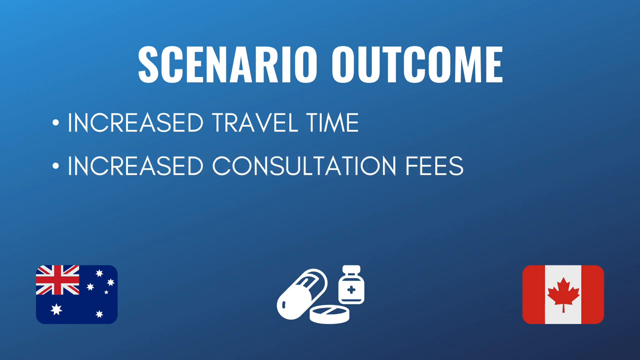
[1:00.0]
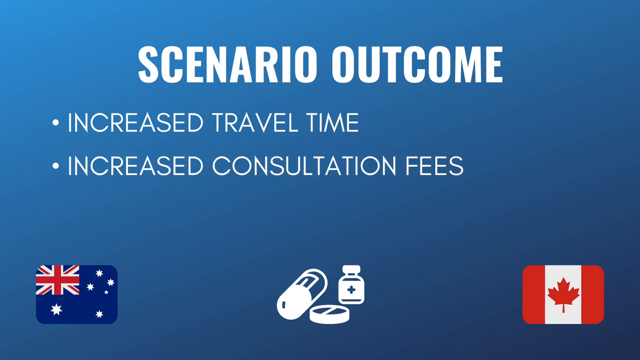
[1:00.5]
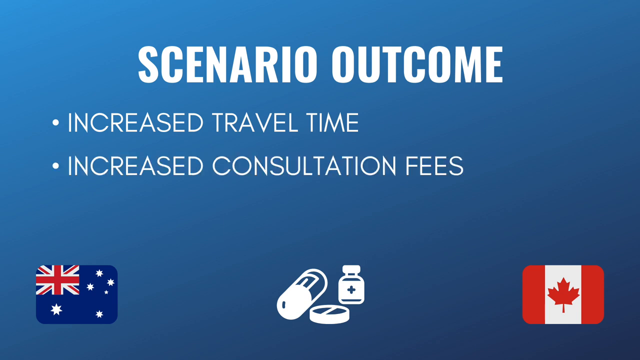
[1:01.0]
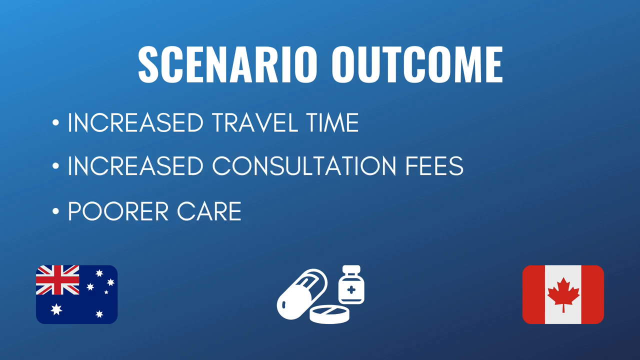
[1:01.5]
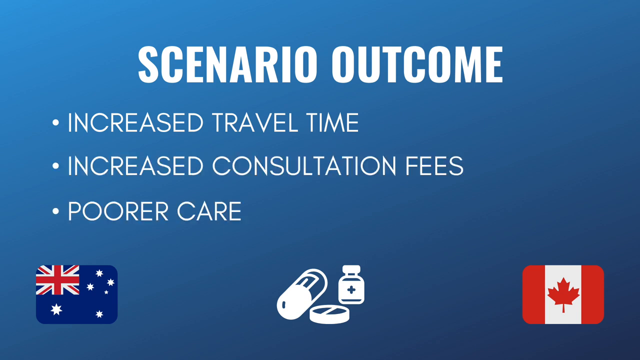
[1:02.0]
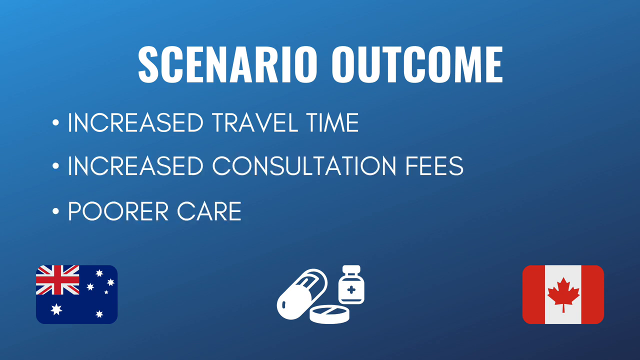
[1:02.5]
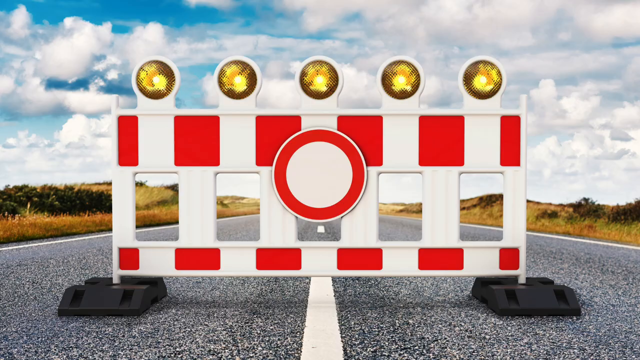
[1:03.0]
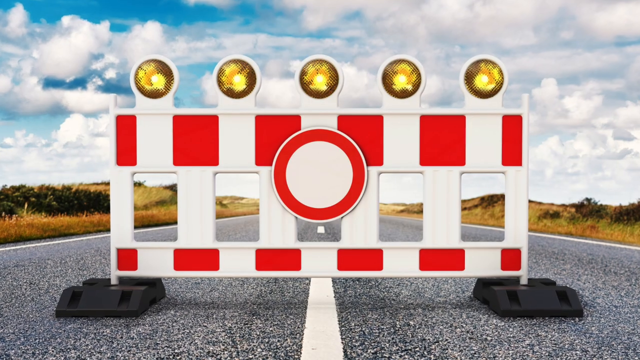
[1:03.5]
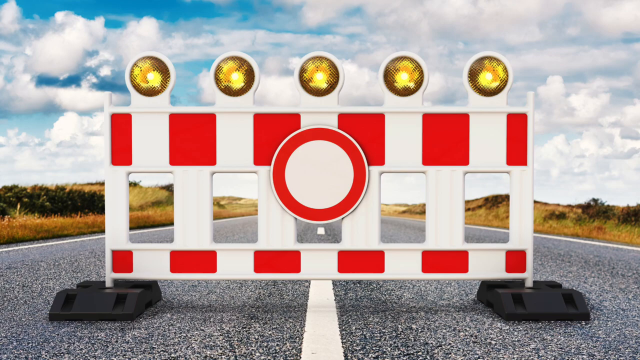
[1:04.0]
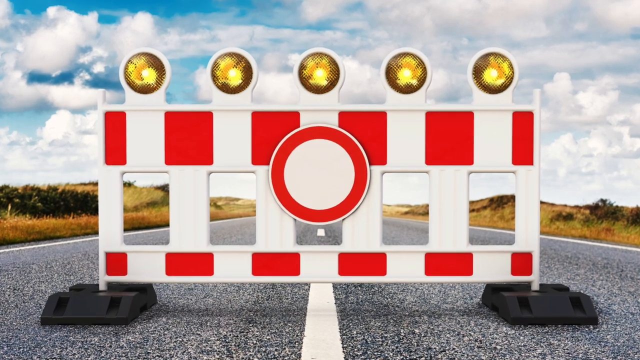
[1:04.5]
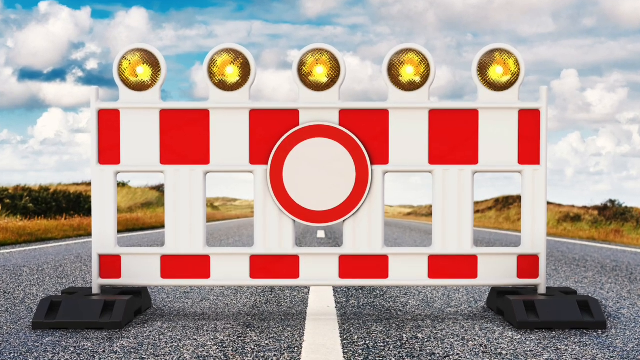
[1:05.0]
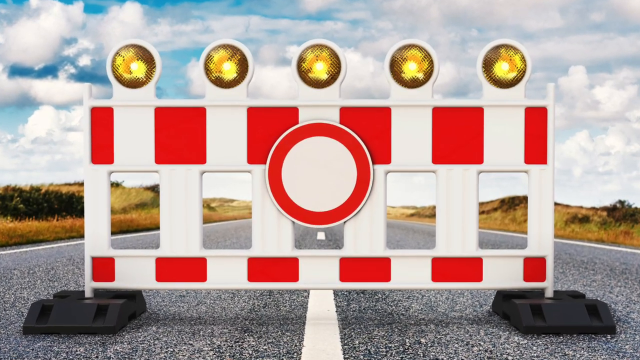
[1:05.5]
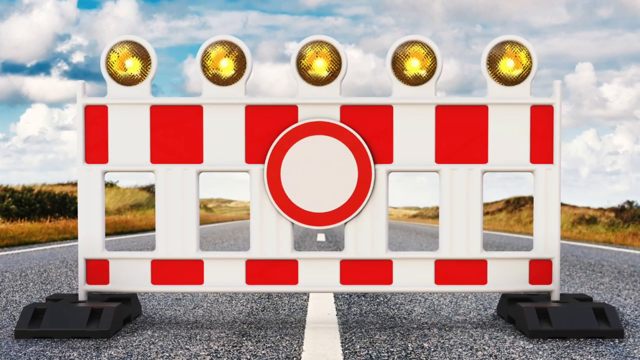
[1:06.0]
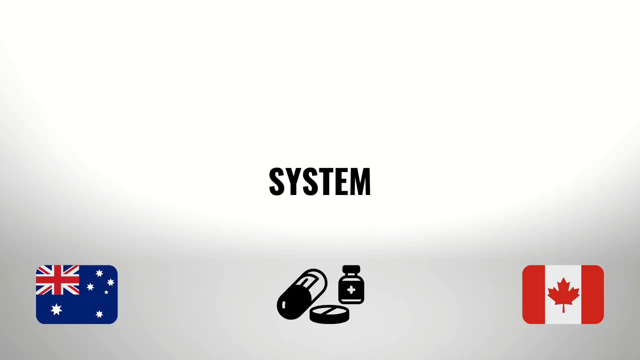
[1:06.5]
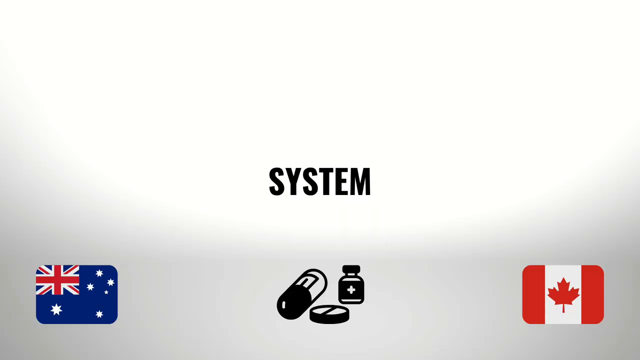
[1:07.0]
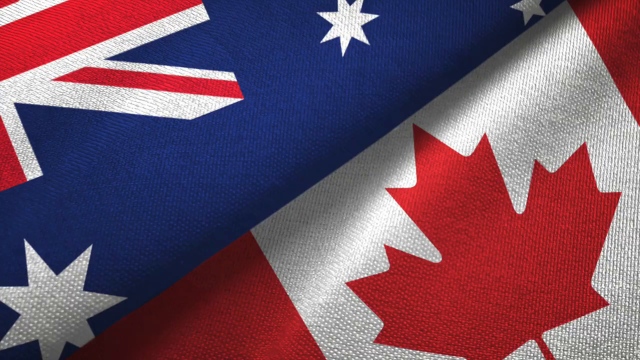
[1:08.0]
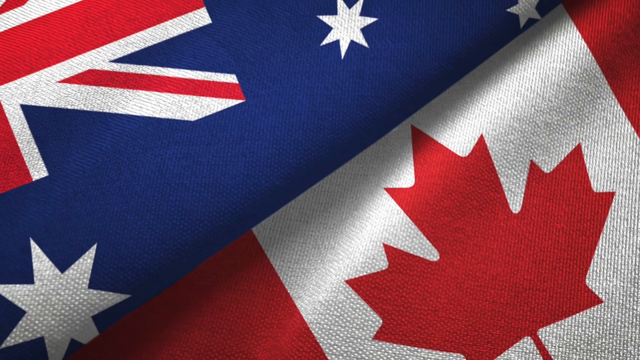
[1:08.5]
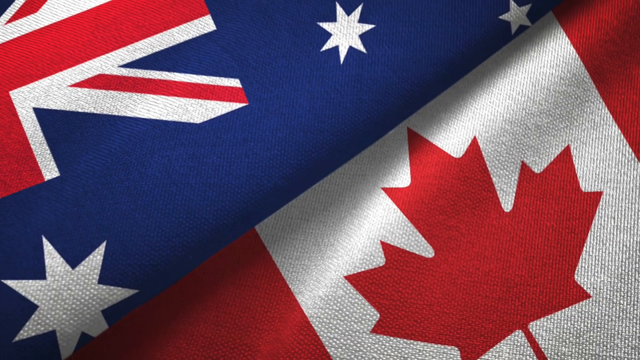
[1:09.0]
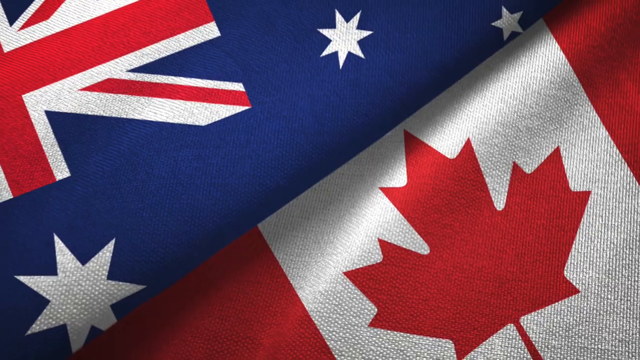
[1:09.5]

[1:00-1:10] A picture shows a big road sign standing in a road, with five yellow lights at the top; it is a plastic white fence-like sign with red strips and a red circle with a white inside. Text says "system of Canada" and possibly "increase consultation fees." The camera zooms in on the sign momentarily. A flag is then shown up close, with the pattern of the material visible: the Canadian flag with its red leaf on a white background, and another flag, possibly the British or American flag, with white stars on a blue background.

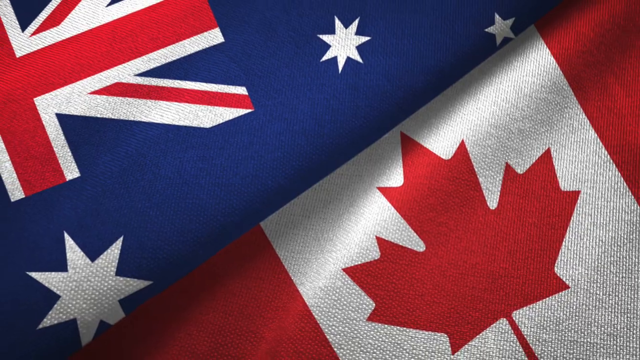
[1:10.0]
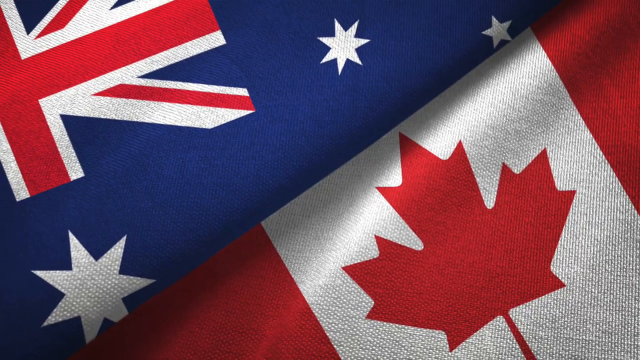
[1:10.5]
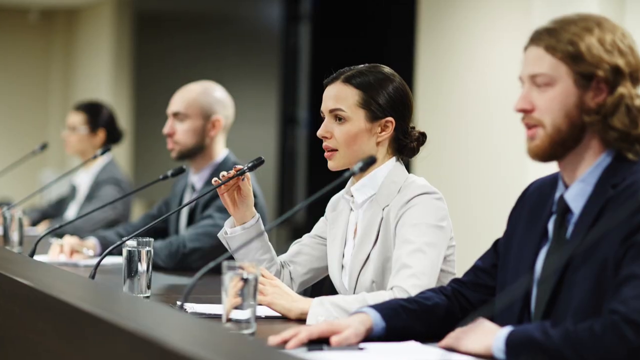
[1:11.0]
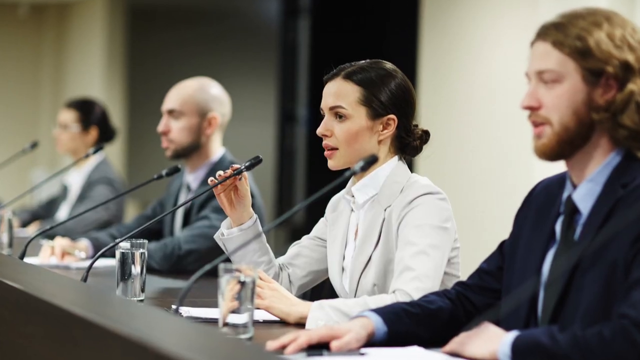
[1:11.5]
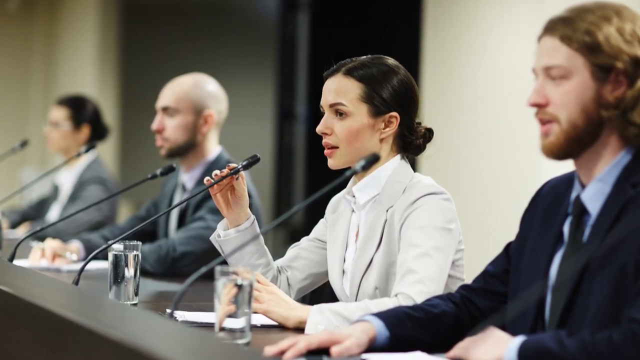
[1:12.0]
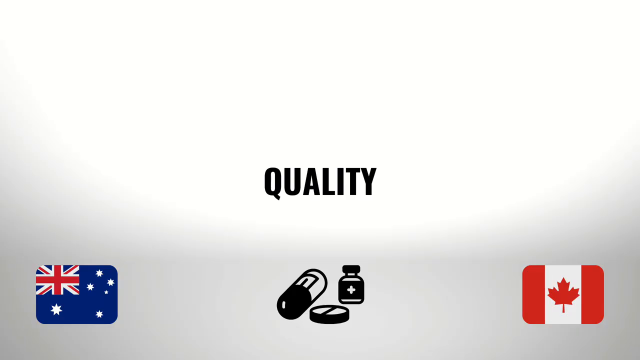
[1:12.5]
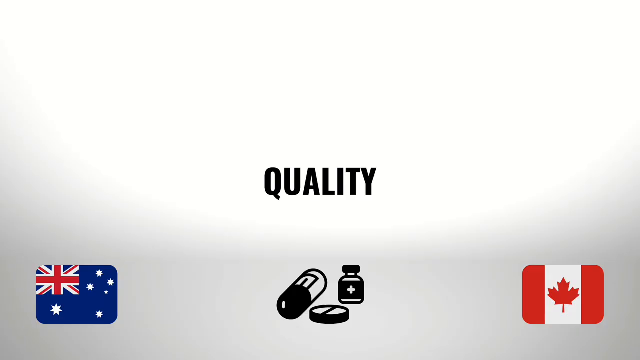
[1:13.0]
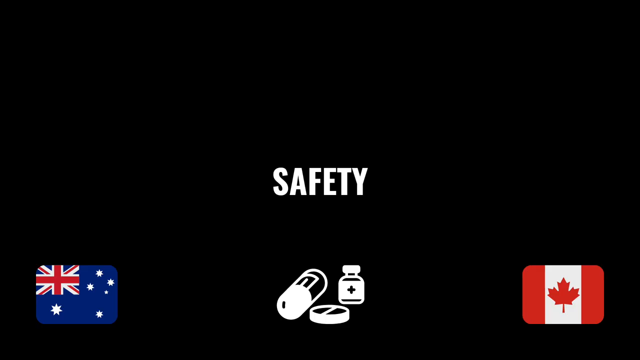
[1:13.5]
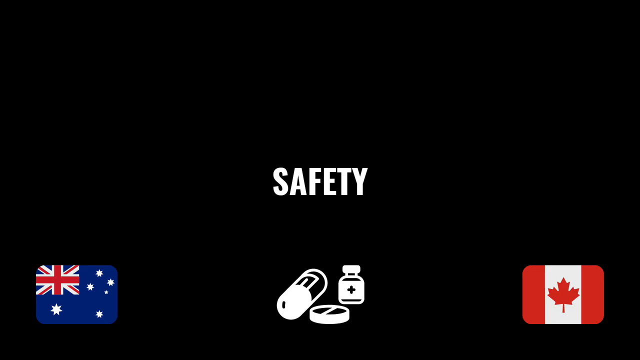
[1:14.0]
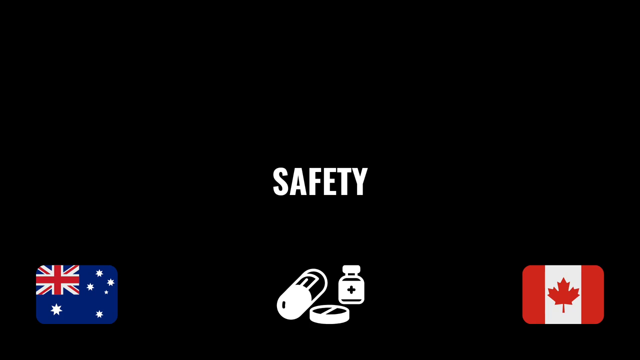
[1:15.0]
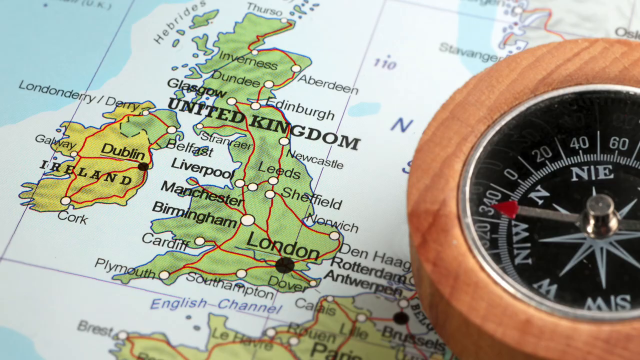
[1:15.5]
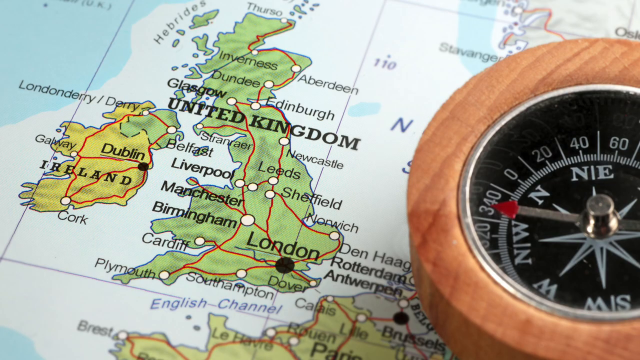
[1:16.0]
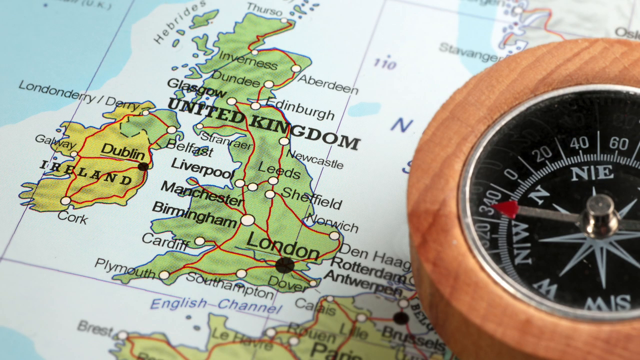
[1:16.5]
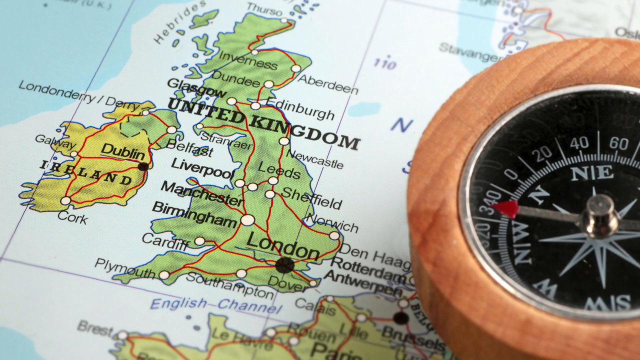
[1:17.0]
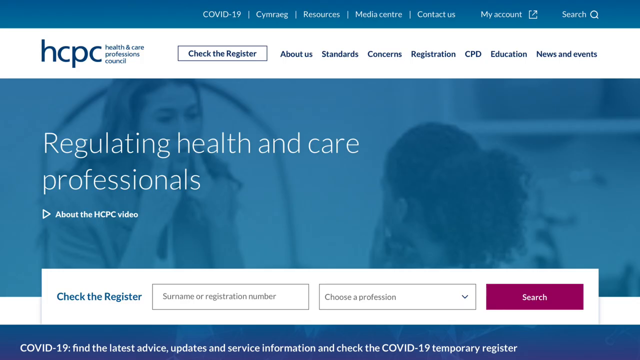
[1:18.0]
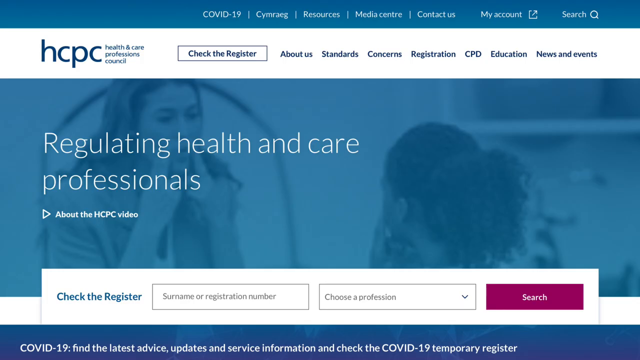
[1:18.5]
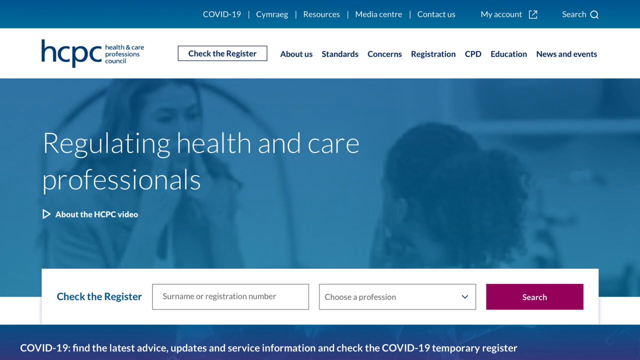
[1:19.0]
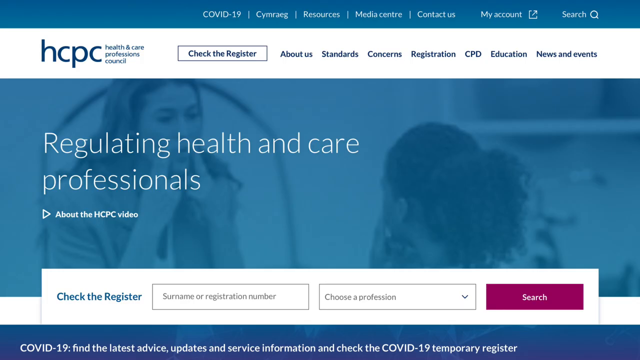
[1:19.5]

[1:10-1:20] Four people are seated at a podium or desk, each with a microphone in front of them, apparently some kind of medical board. The man closest to the camera has shoulder-length reddish-blonde hair, a short beard and a moustache. To his right is a lady in a very light gray suit with sleek black hair tied in a bun; to her right is a man with no hair on his head, a short beard and a gray suit; and to his right is another lady. Text then says "quality," then "safety." A map of the United Kingdom and Ireland appears with a wooden compass to its right. Then a website shows "HCPC," "Healthcare Professions Council," "Regulating Health and Care Professionals."